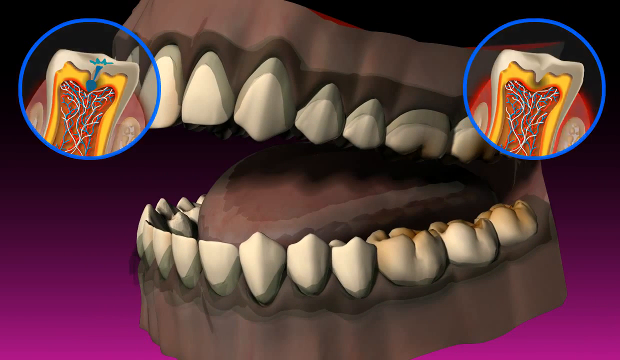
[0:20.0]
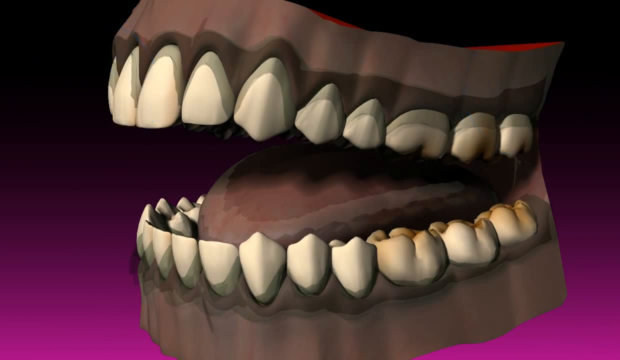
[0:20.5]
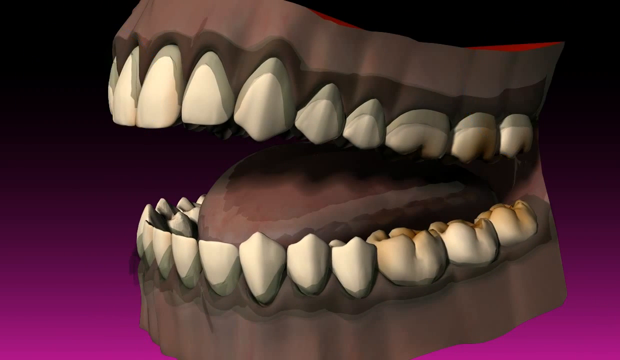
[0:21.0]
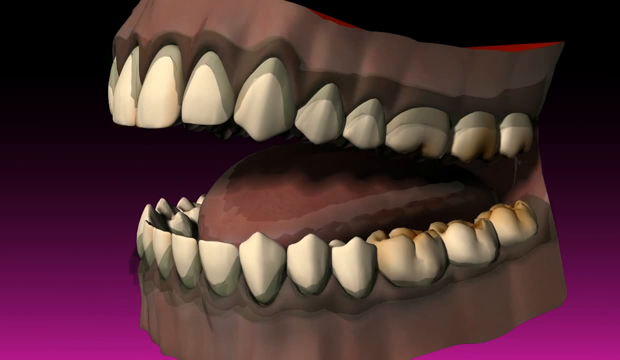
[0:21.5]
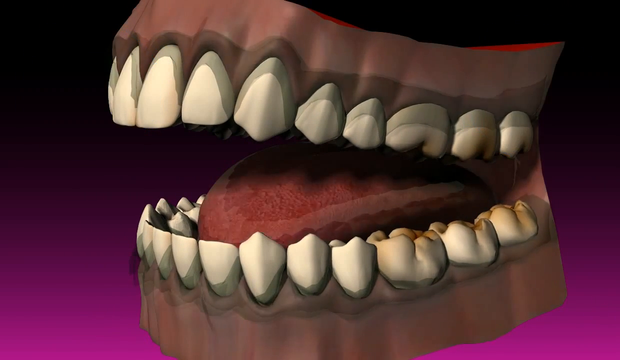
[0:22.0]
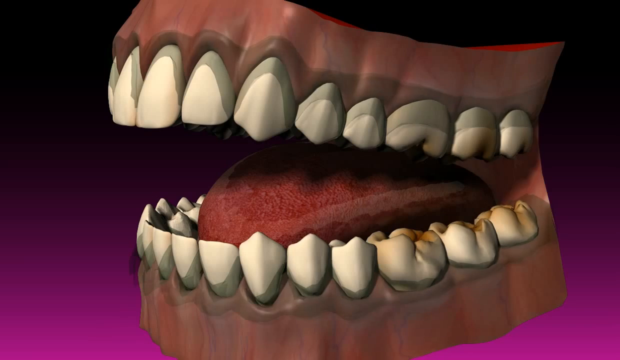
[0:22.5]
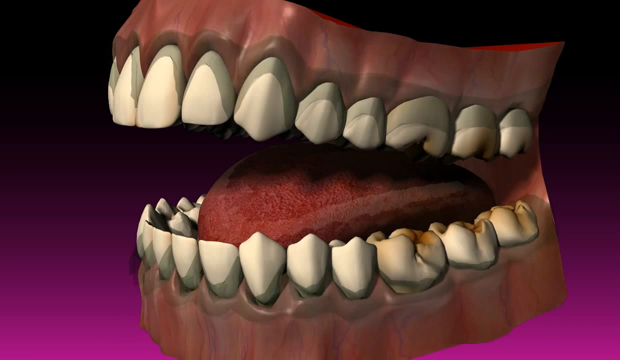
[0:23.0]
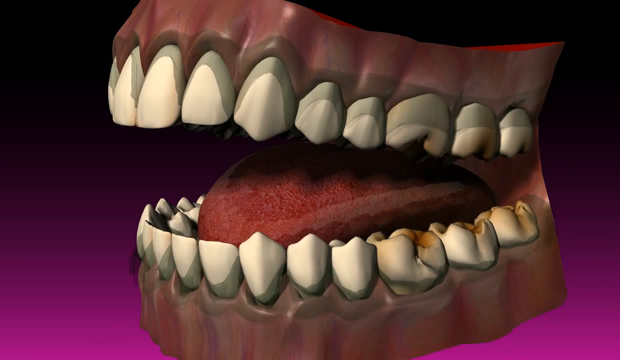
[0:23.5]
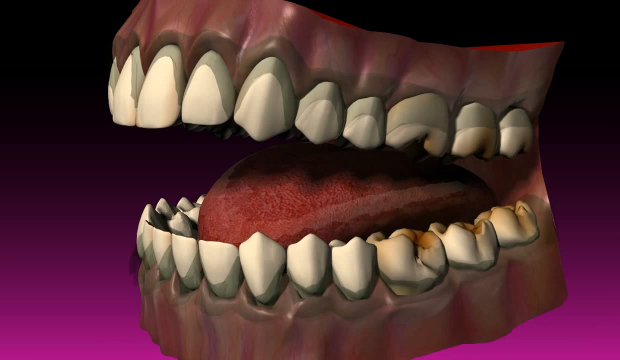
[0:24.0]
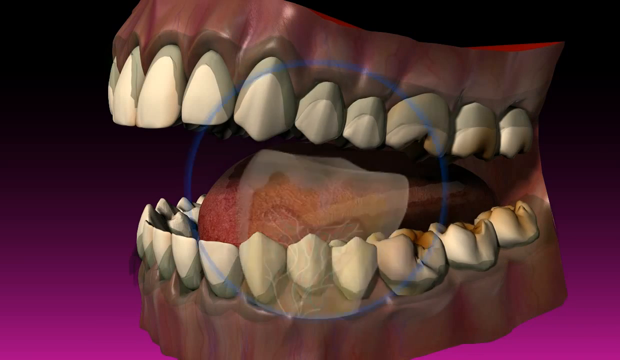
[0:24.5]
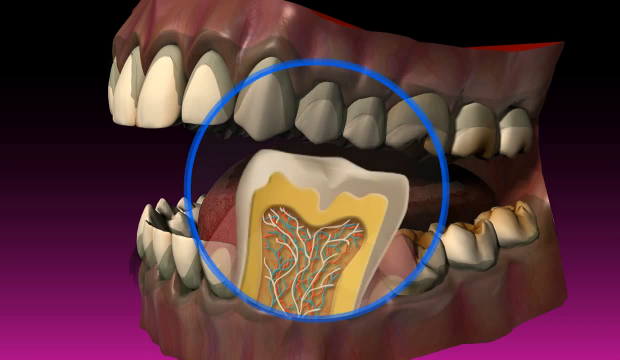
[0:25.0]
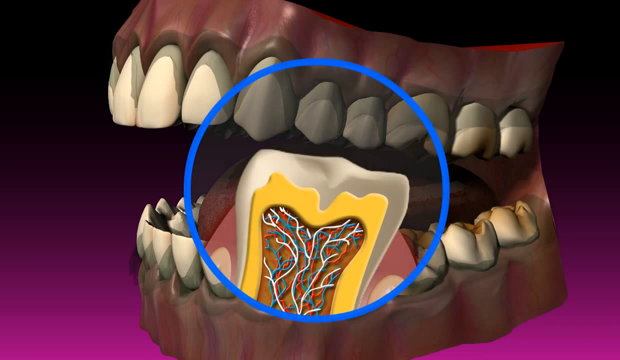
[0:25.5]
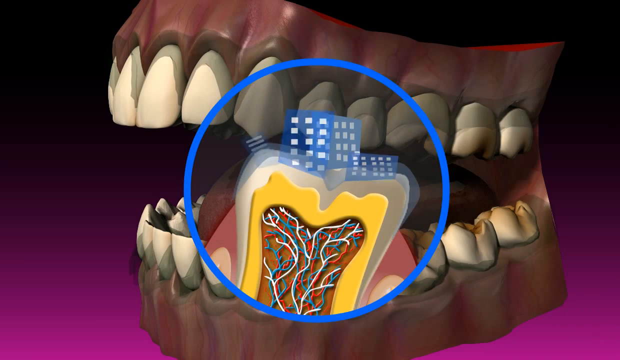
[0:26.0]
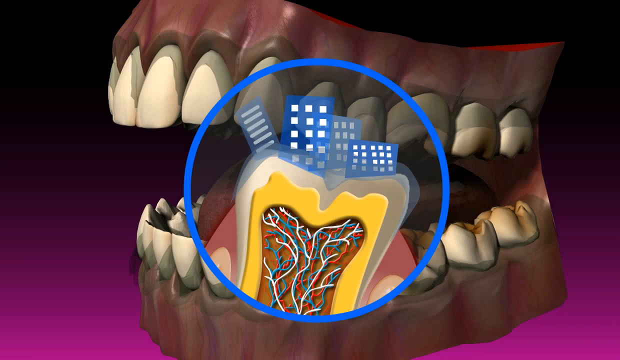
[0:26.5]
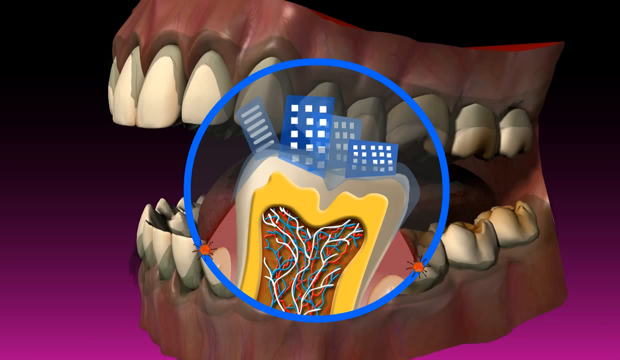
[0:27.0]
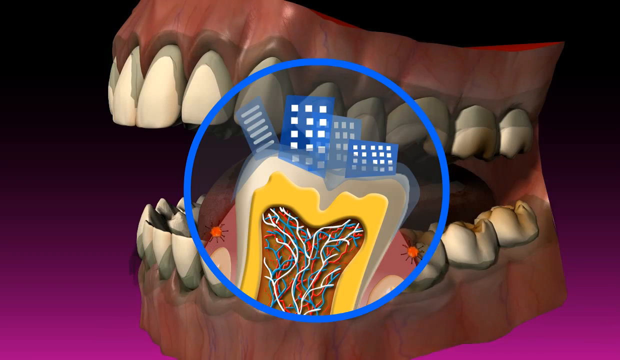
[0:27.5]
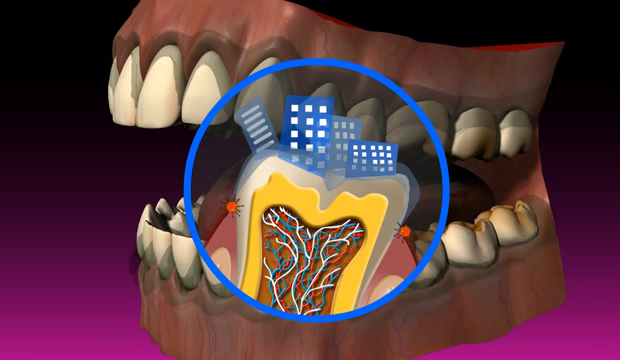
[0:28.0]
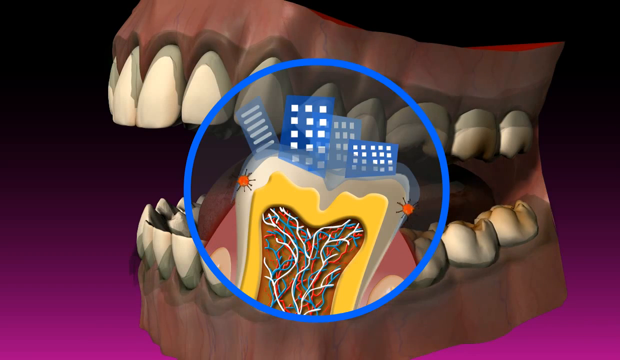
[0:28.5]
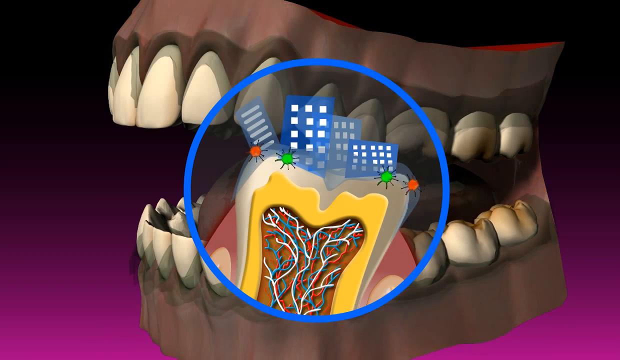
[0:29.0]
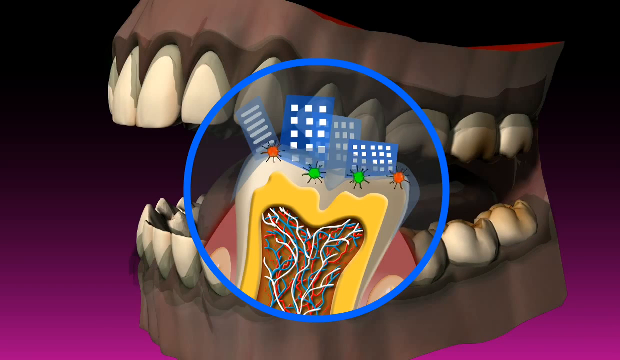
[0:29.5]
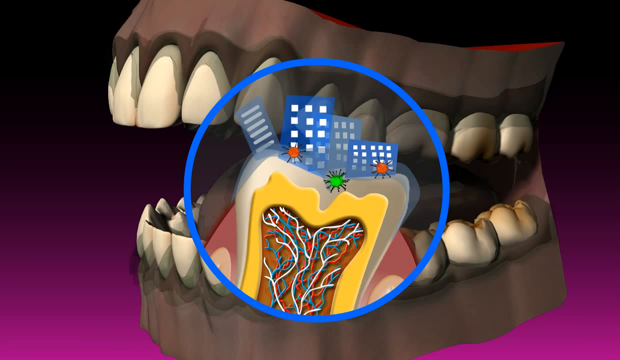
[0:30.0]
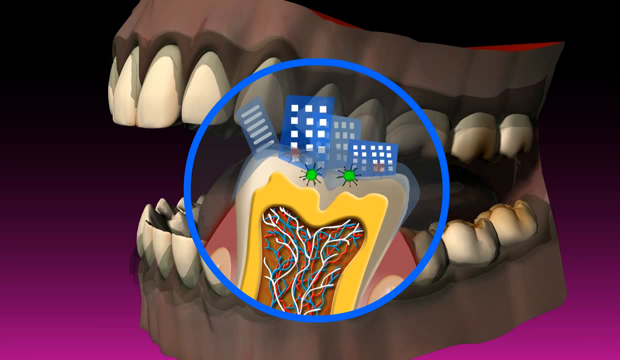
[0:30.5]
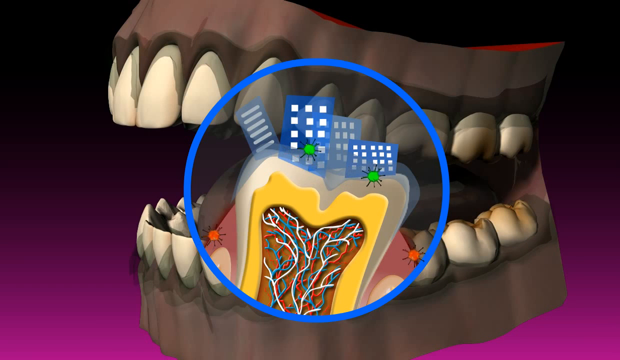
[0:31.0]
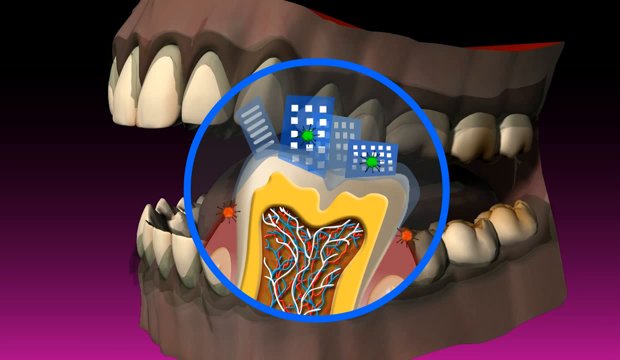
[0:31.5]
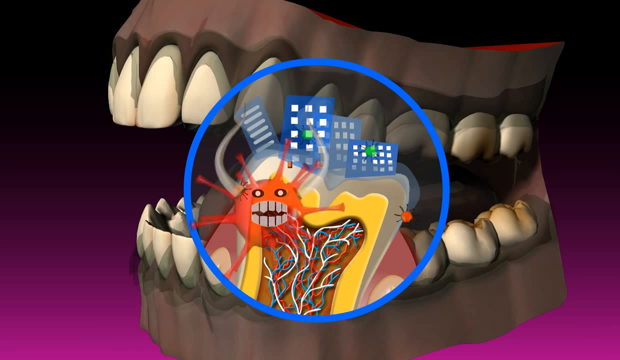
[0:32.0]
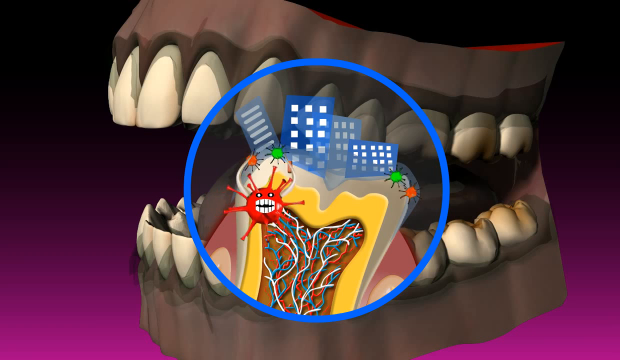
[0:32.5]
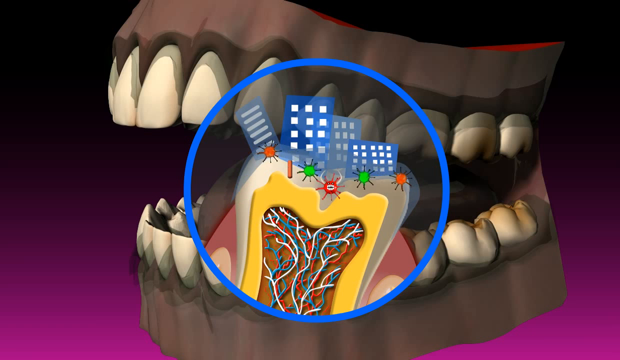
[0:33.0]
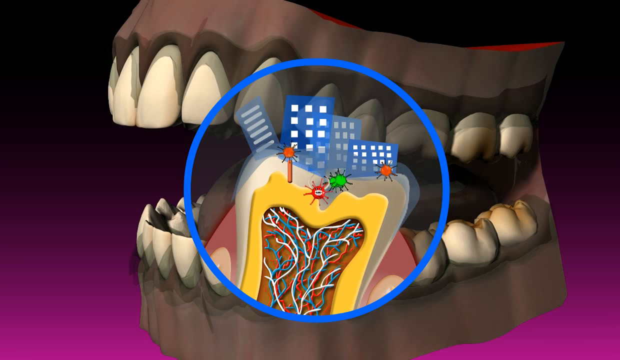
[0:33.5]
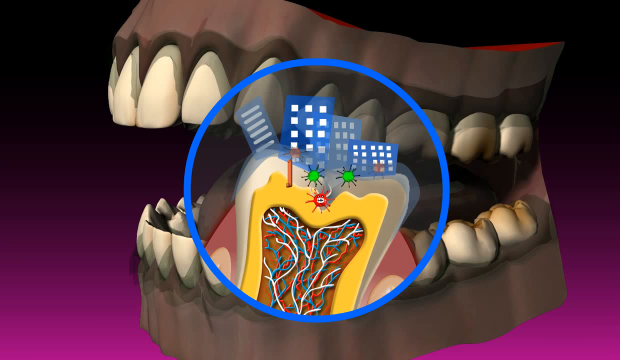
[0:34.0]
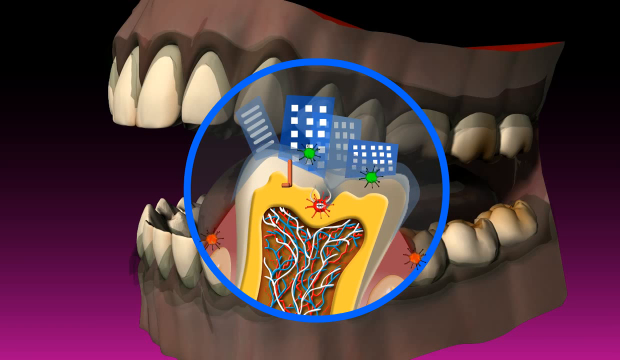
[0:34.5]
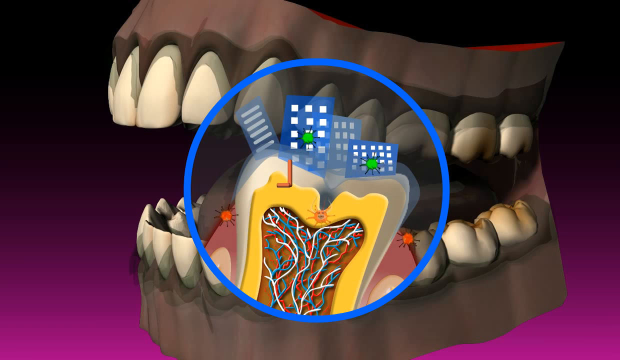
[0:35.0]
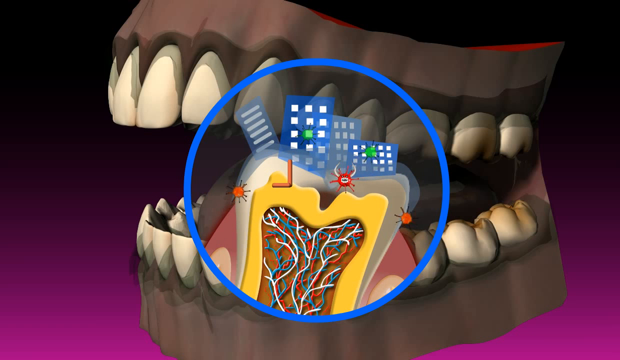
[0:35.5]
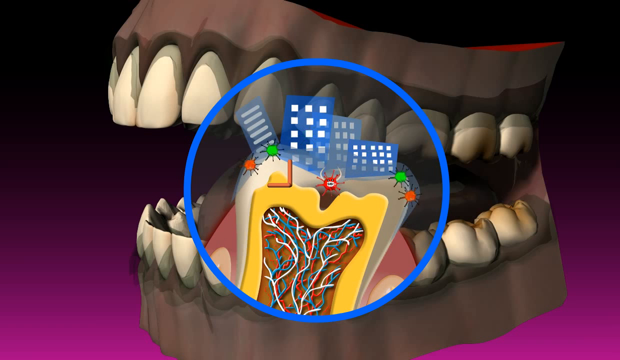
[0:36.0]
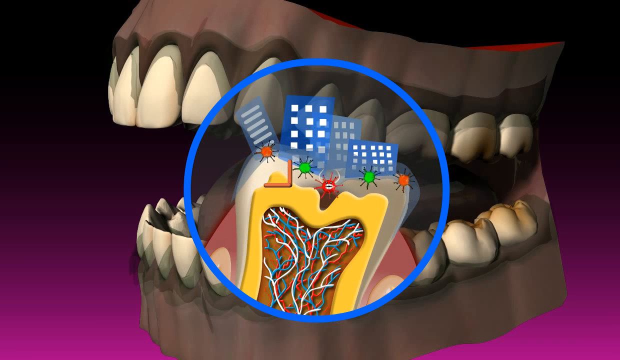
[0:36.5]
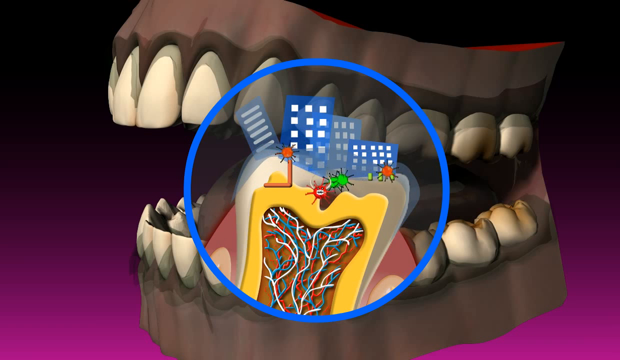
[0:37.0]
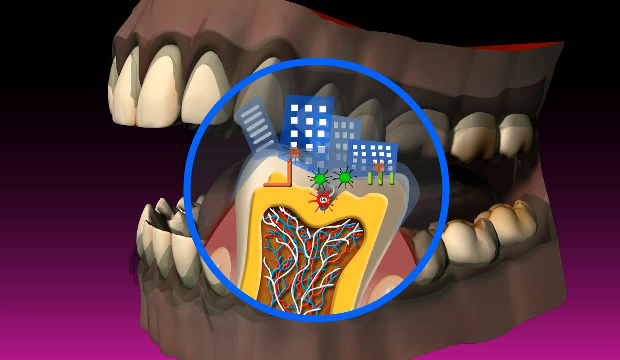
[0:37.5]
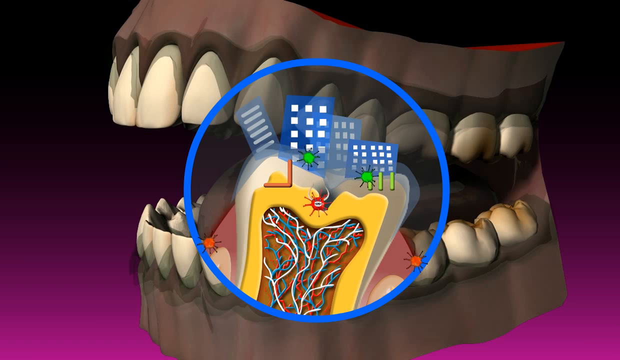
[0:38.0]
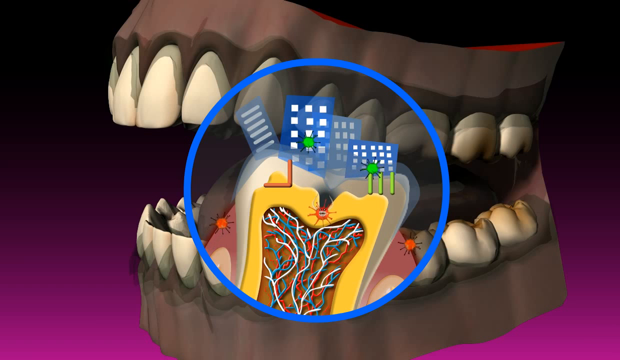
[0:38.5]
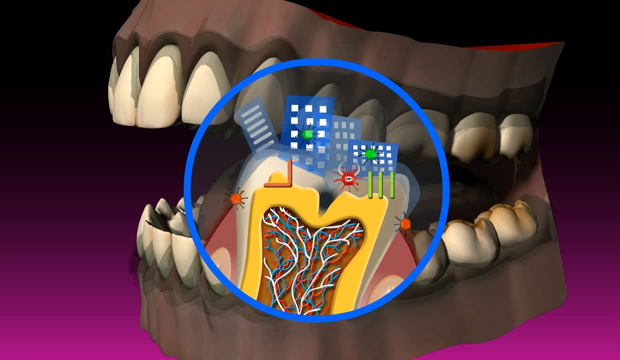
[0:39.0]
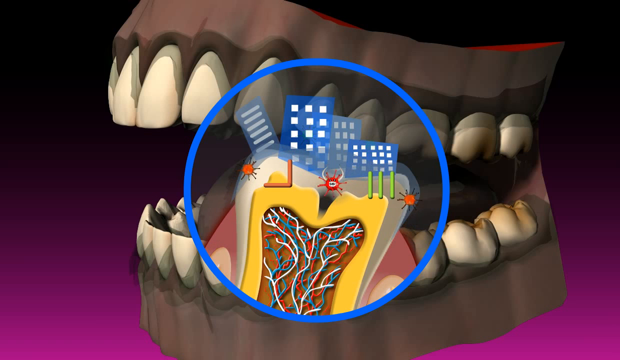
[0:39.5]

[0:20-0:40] A 3D animation shows teeth in an open mouth, with the tongue at the bottom of the teeth, viewed from the left side. In the top left and top right, small circles with blue outlines appear very quickly, each showing a single tooth: its outside is white, beneath that is a yellow area, and beneath the yellow area are multiple strands of blue, white and red that appear to be nerves. At first the teeth are kind of dark and the gums around them are a darker color; then what looks like a time-lapse shows the gums and the tongue becoming more red instead of a darker gray color. A large blue circle appears in the center of the screen containing a single white tooth with a yellow interior and multiple white, red and blue nerve strands inside. Something that looks like abstract drawings of skyscrapers appears on top of the tooth; the skyscrapers are blue with white square windows. Little red and green objects that look almost like spiders move up the sides of the tooth, then in front of and above the city buildings. One of these organisms has a red face similar to a devil face. It goes to the top of the tooth, where there is a chasm, works its way down to the yellow area inside the tooth, and disappears.